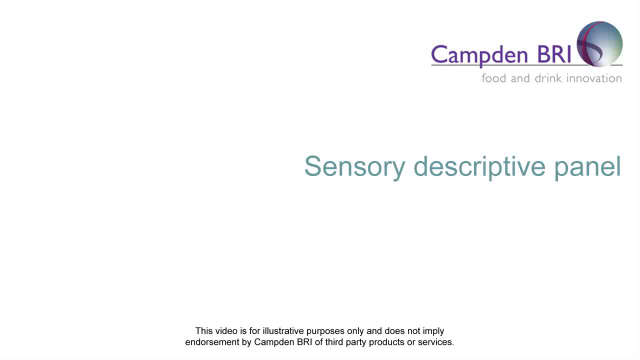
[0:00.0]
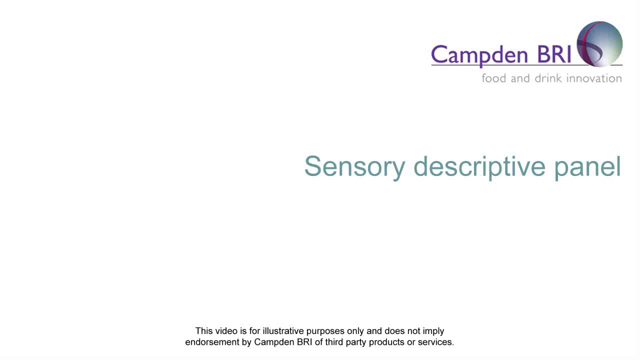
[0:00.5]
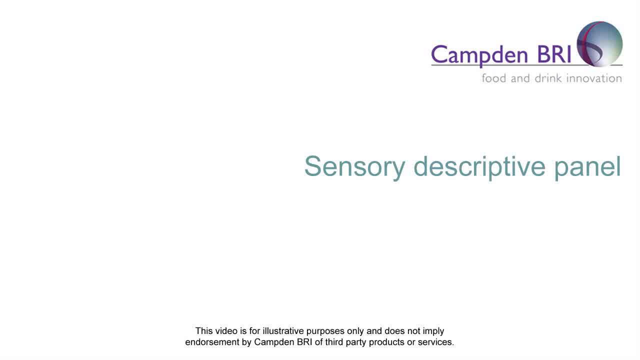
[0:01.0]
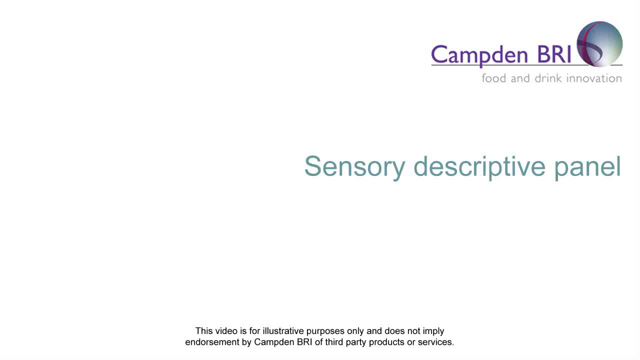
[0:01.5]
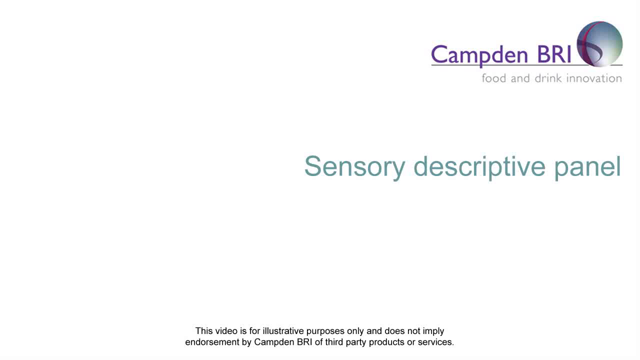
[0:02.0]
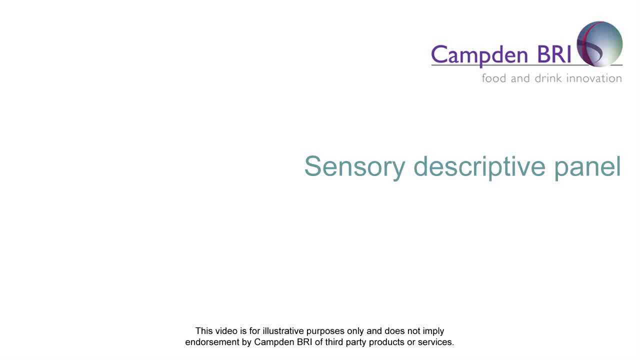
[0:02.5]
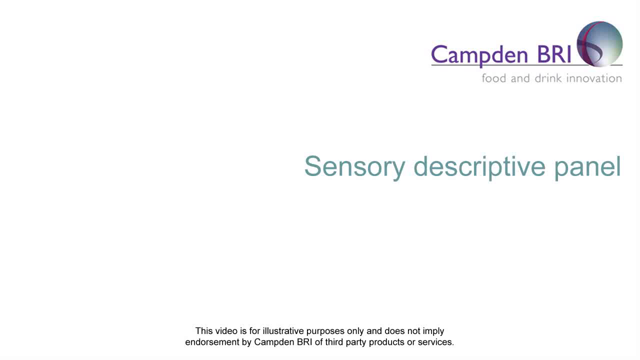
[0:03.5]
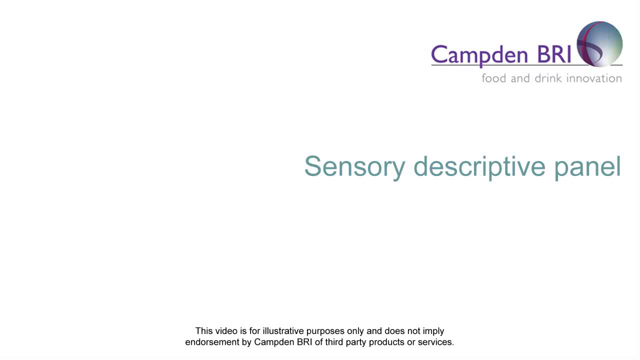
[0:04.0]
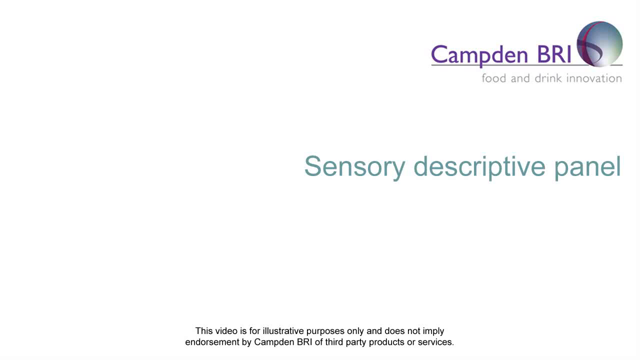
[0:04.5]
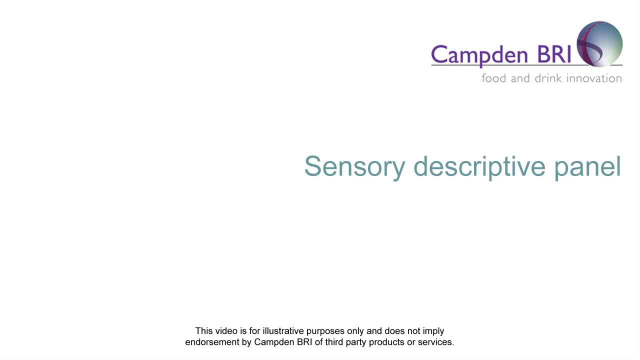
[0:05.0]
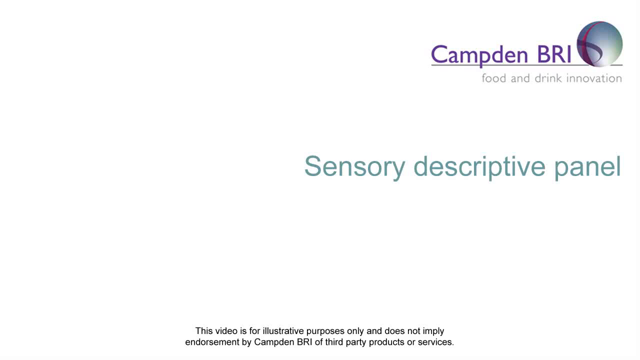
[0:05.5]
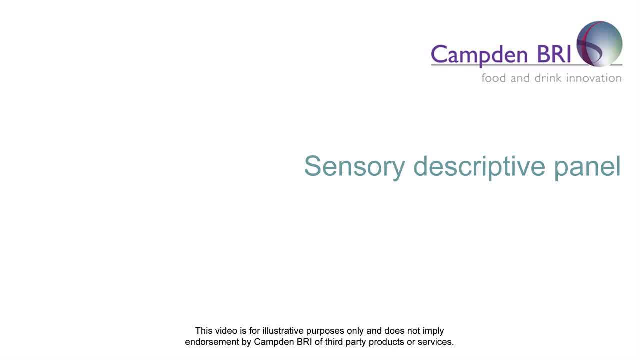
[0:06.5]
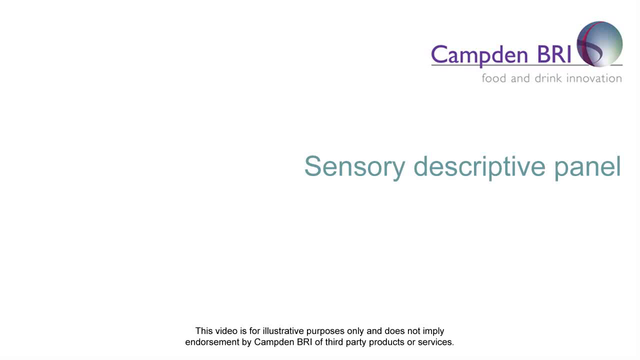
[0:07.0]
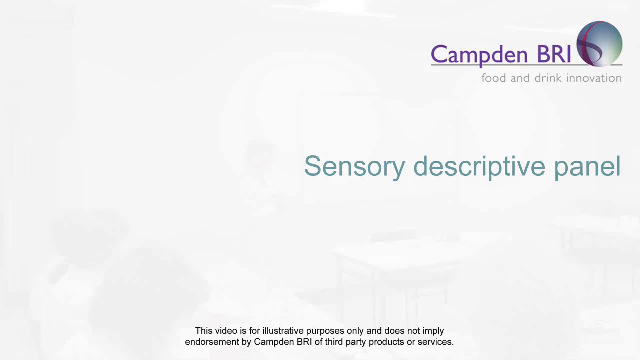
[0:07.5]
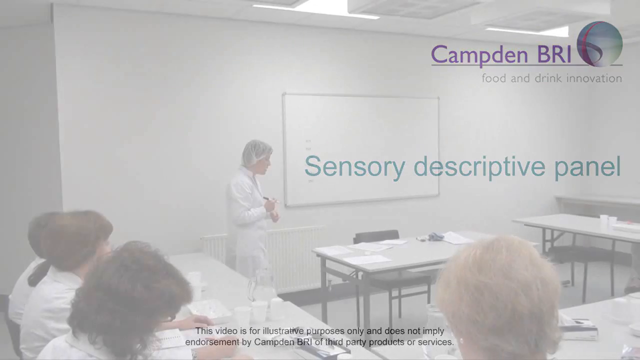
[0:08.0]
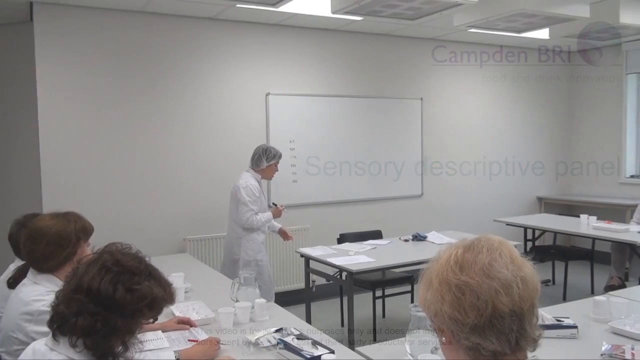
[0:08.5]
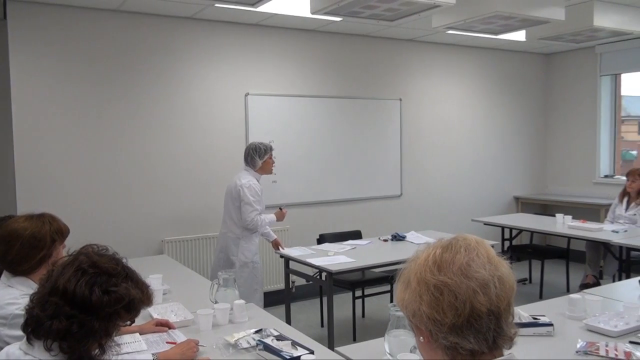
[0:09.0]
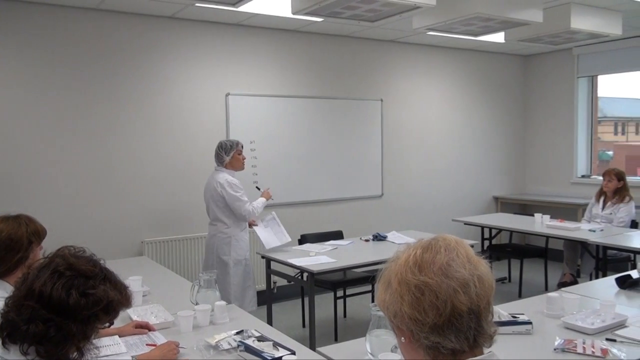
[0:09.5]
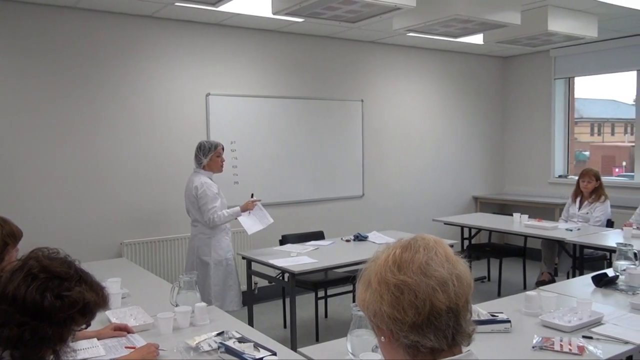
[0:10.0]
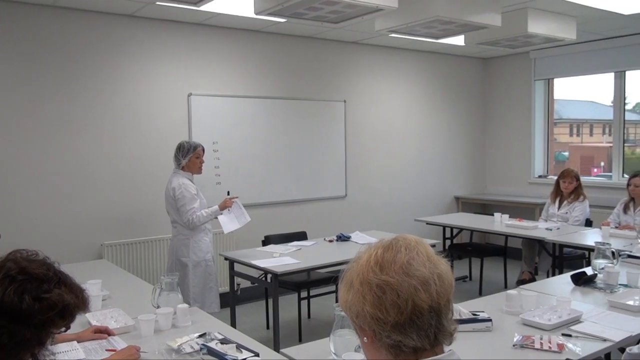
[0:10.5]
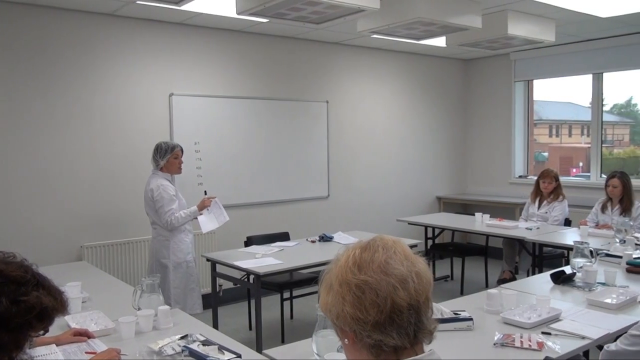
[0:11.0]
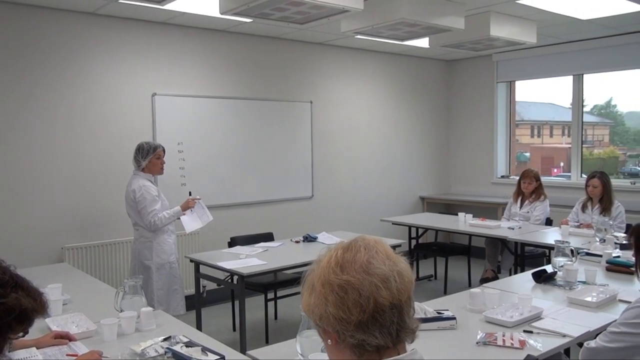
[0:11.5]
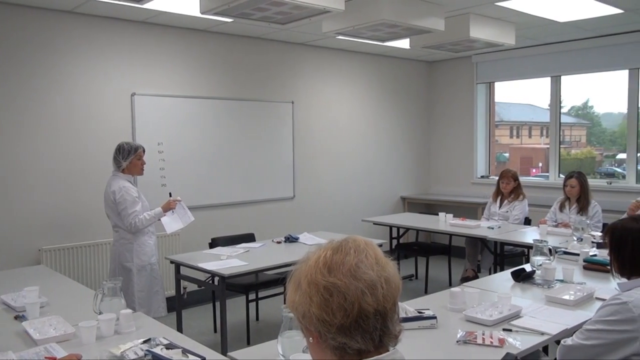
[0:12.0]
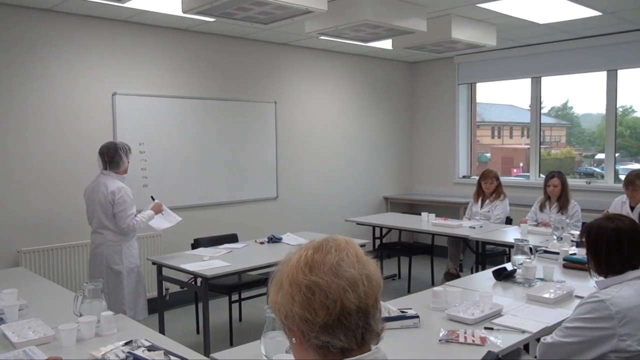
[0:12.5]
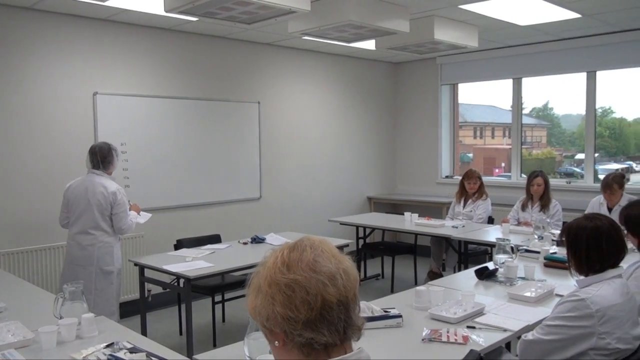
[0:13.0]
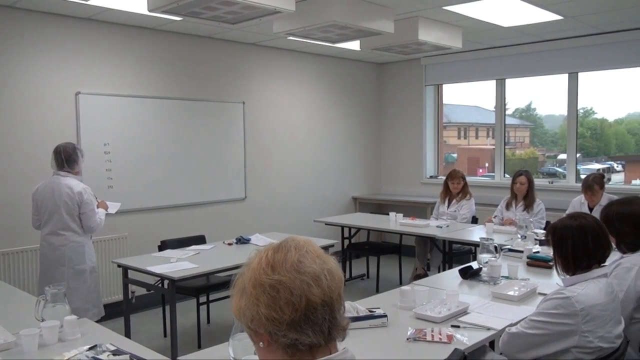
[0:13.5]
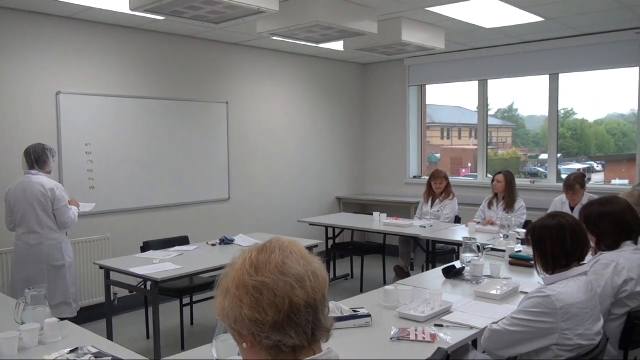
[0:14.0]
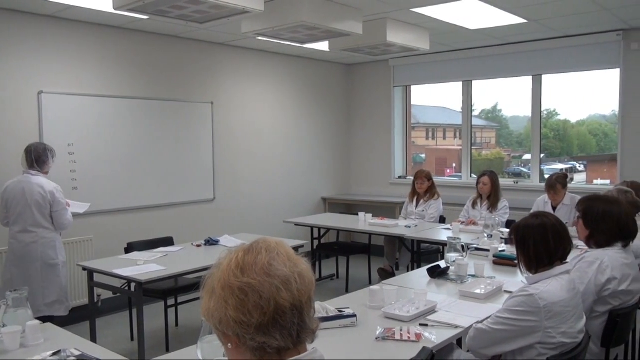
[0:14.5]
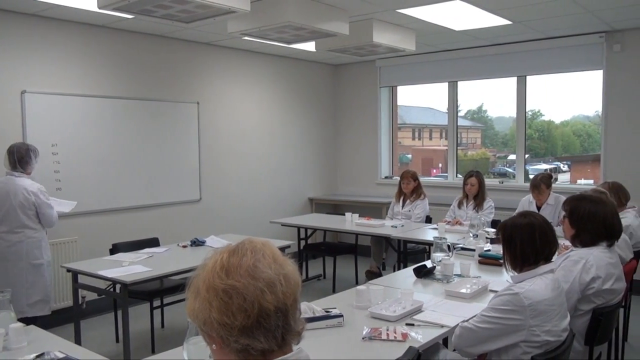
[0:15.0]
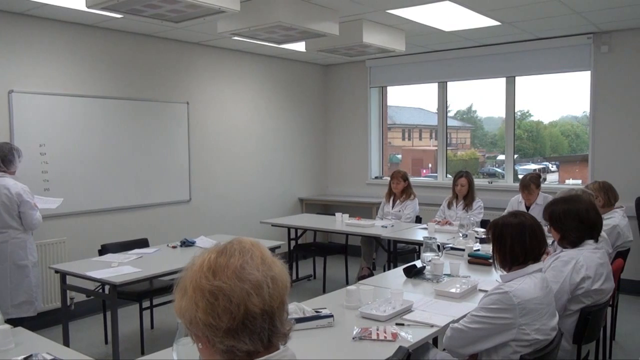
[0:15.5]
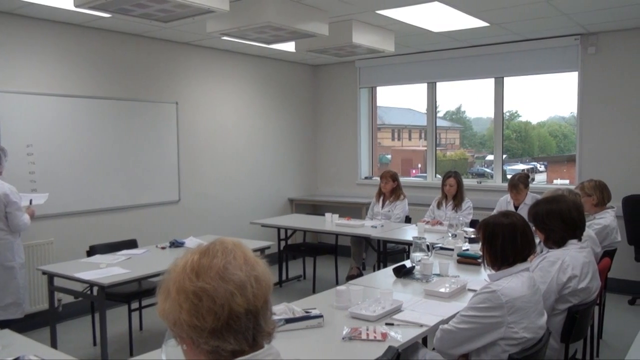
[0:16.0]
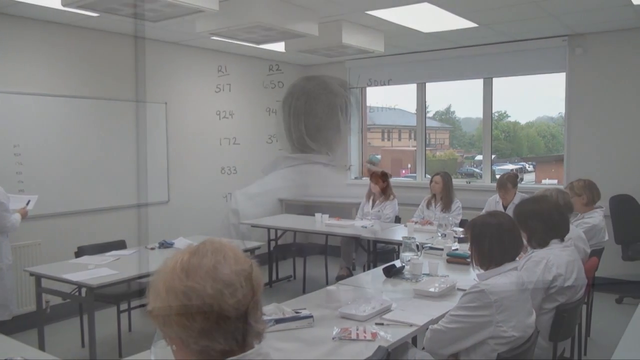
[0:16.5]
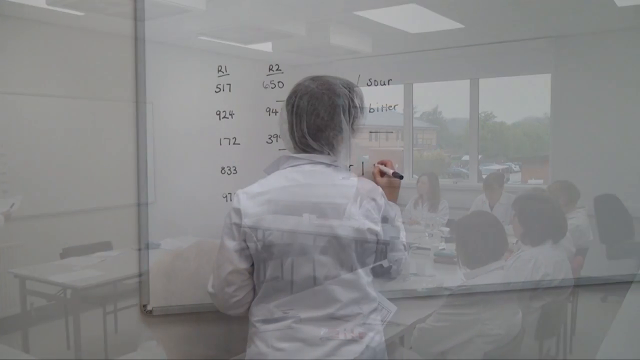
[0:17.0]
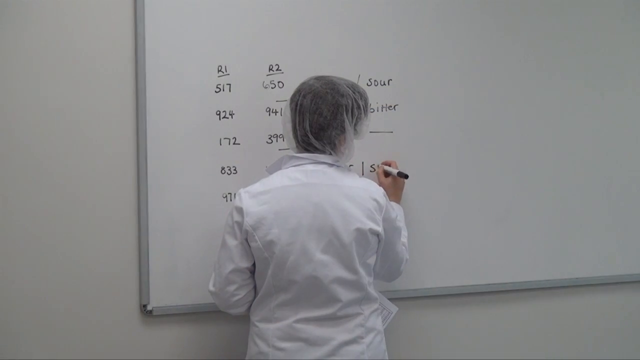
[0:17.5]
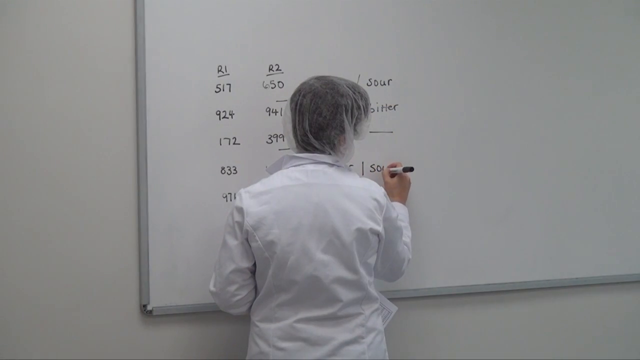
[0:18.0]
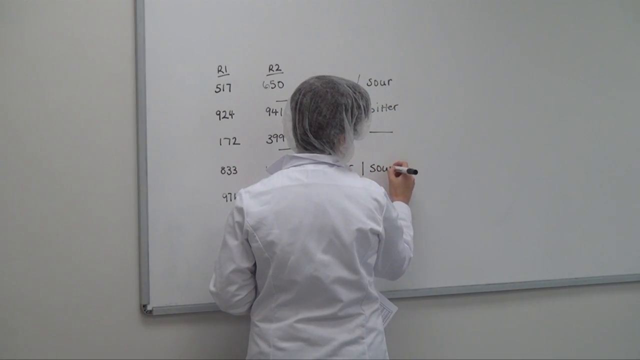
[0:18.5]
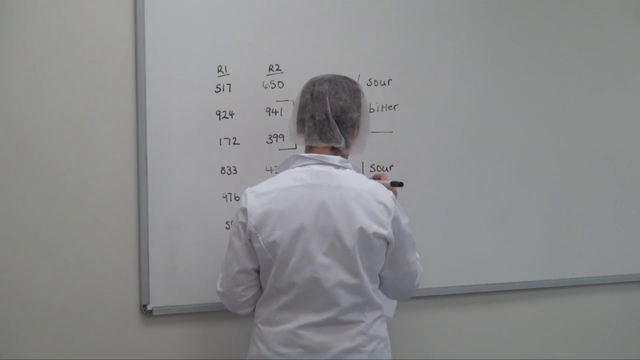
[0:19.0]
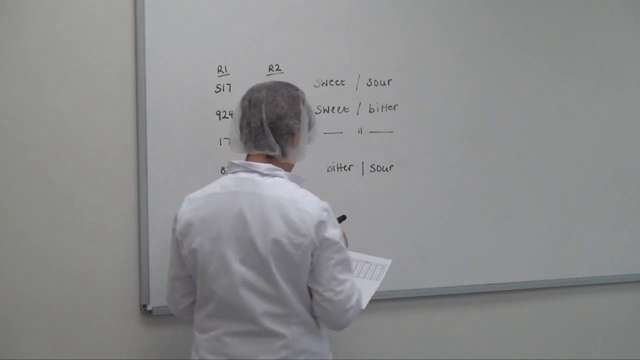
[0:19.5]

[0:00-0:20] A round logo resembling a gray sphere with two crossing purple lines appears in the top right corner, with the text "Campden BRI" and, beneath it, "food and drink innovation". Words in green read "sensory descriptive panel", and text says "this video is for an illustration purpose only and does not represent Campden in any way". A woman who looks to be in her early 40s stands in front of a group of women. She appears to be teaching: she writes something on the board, talks, and holds a paper. She wears a white coat, as does everyone else.